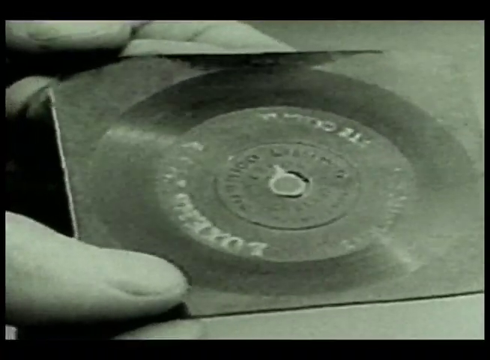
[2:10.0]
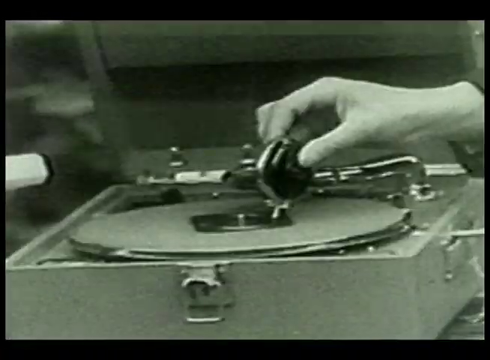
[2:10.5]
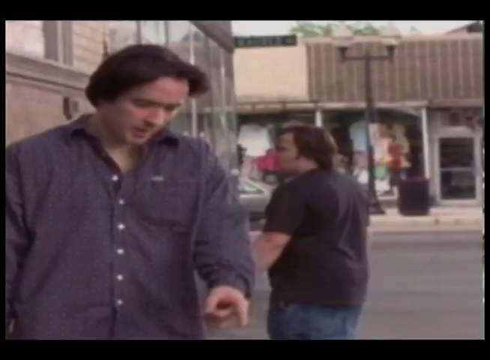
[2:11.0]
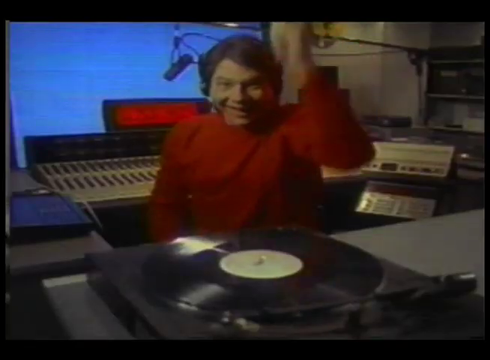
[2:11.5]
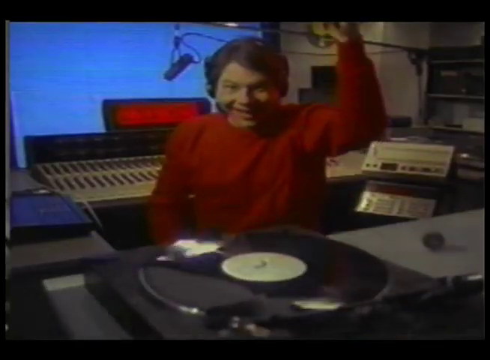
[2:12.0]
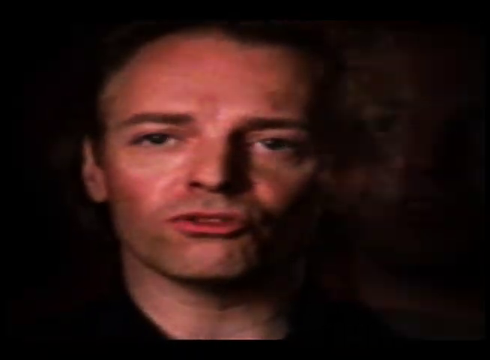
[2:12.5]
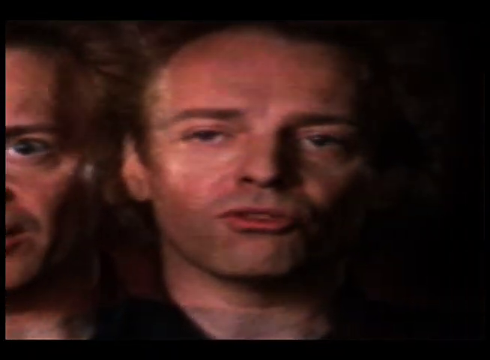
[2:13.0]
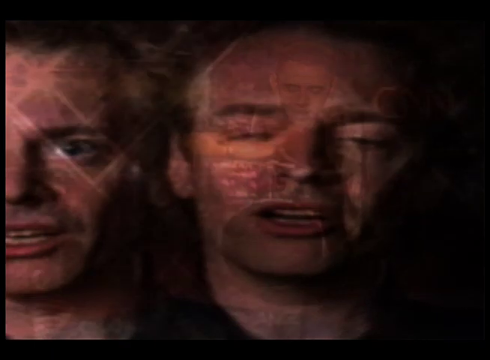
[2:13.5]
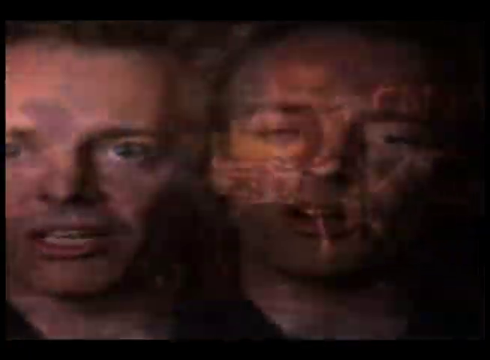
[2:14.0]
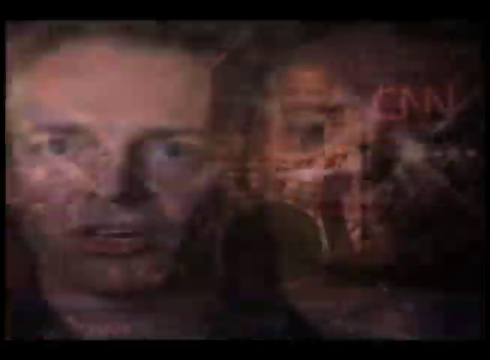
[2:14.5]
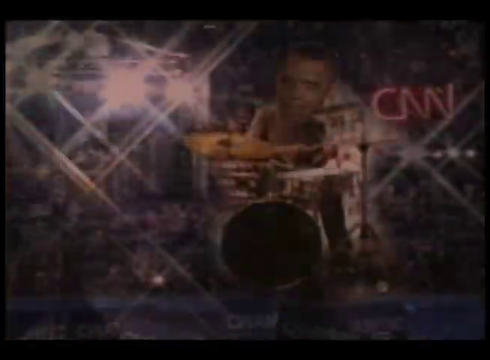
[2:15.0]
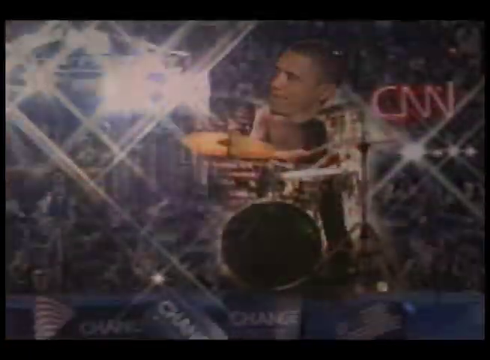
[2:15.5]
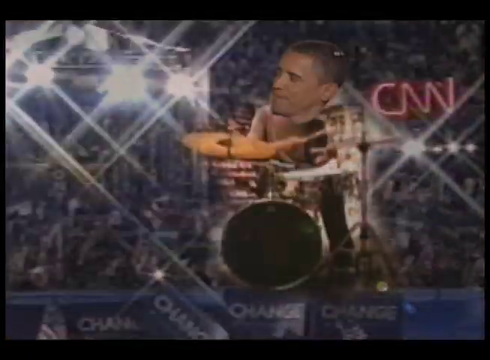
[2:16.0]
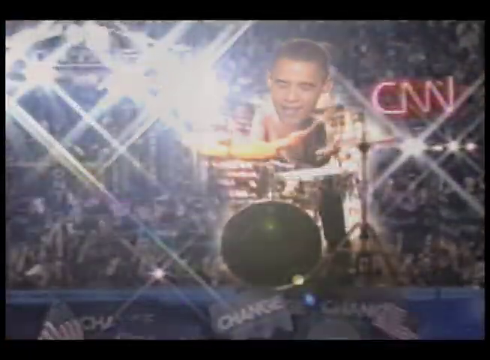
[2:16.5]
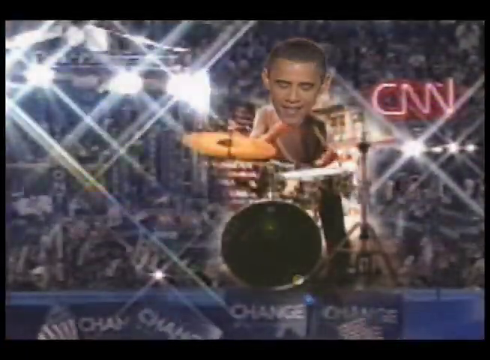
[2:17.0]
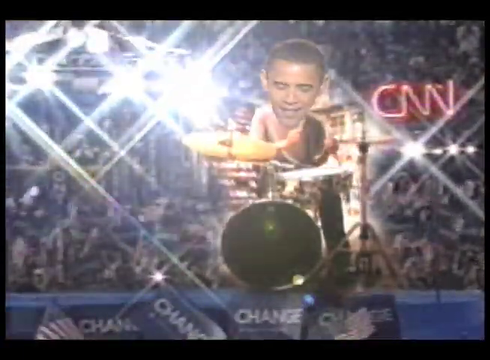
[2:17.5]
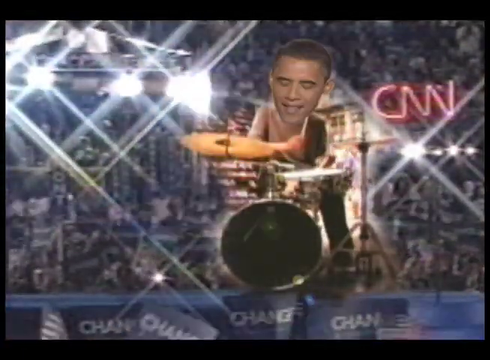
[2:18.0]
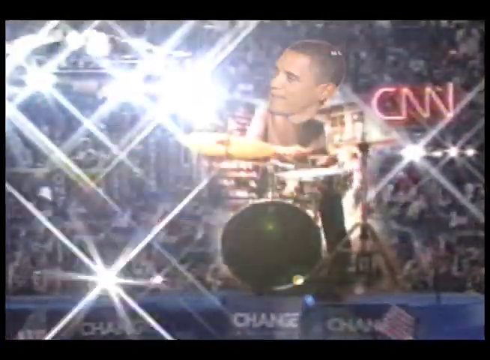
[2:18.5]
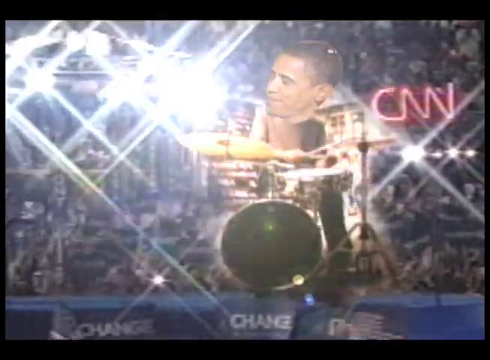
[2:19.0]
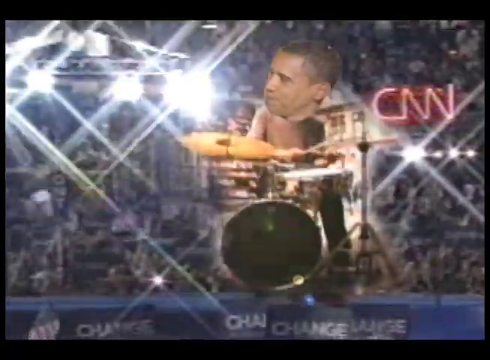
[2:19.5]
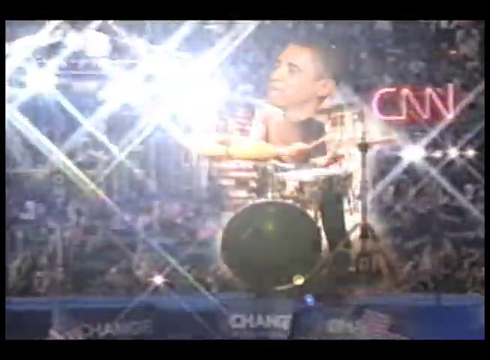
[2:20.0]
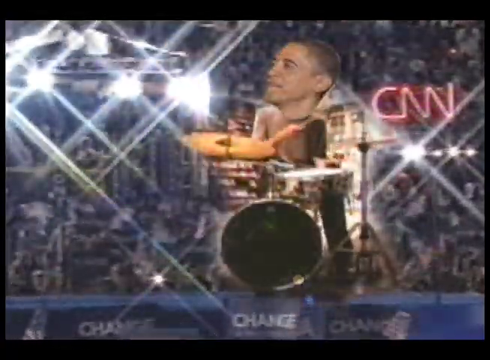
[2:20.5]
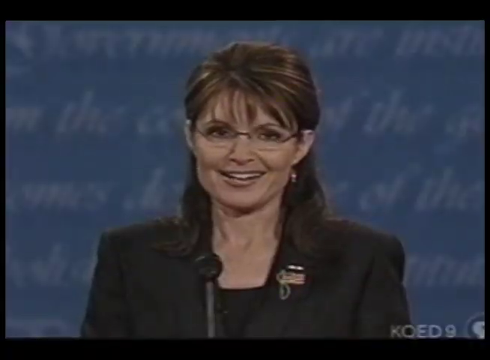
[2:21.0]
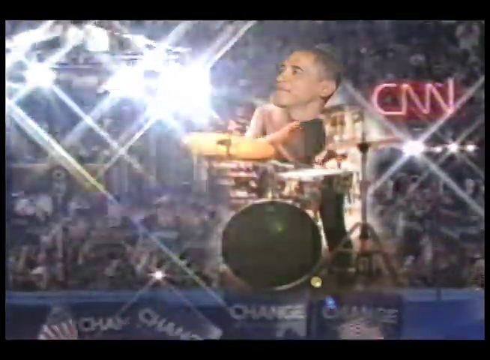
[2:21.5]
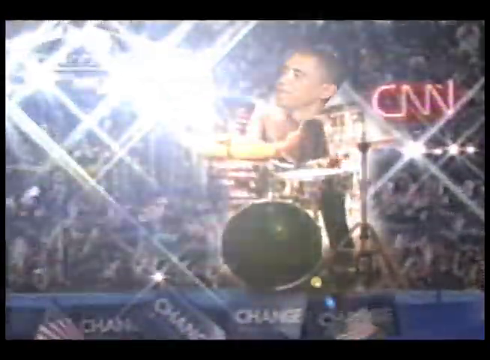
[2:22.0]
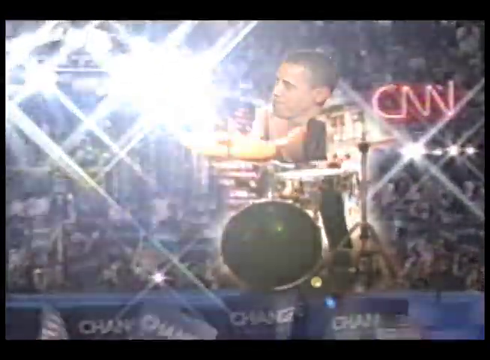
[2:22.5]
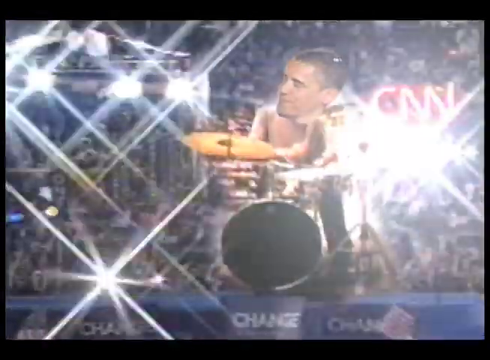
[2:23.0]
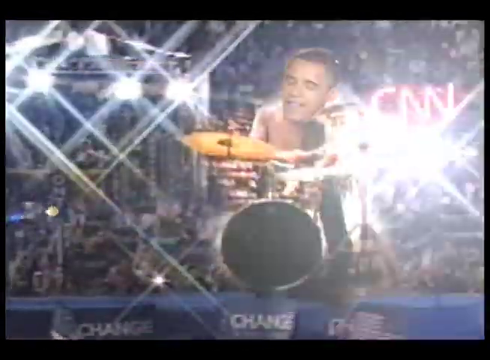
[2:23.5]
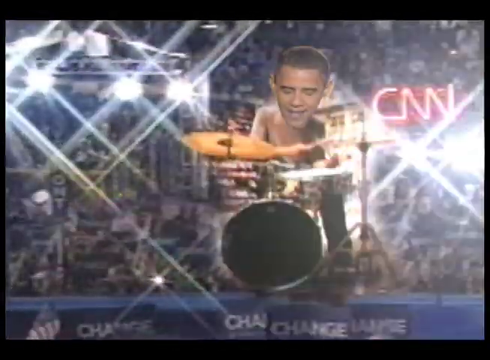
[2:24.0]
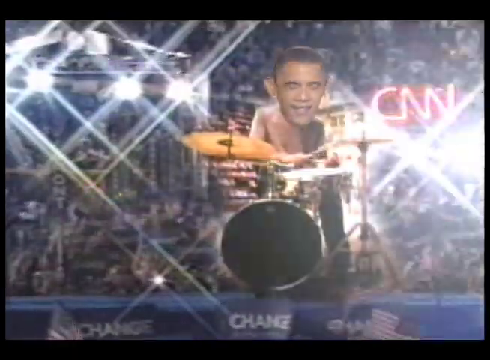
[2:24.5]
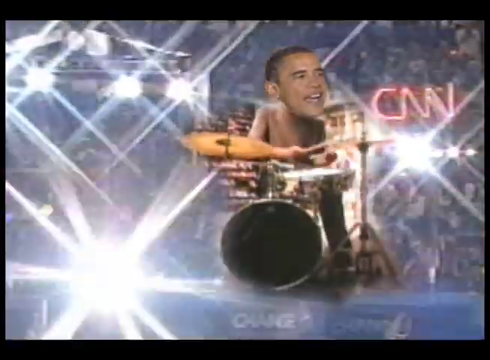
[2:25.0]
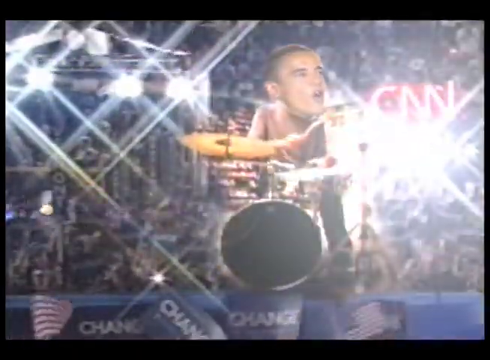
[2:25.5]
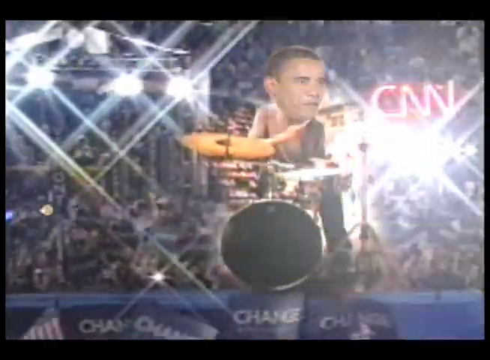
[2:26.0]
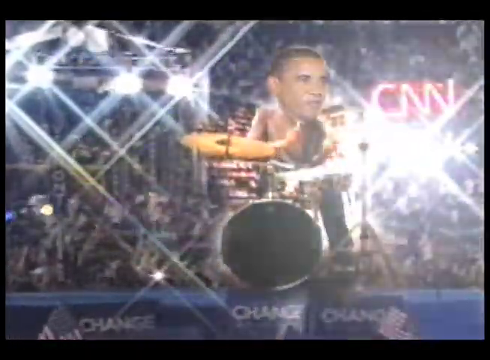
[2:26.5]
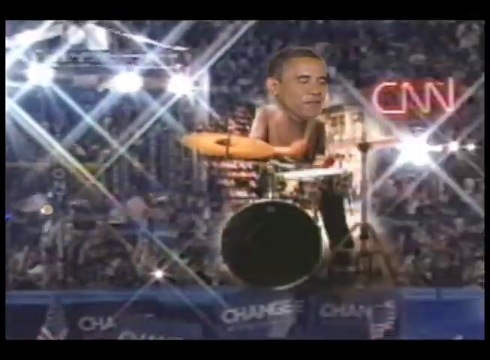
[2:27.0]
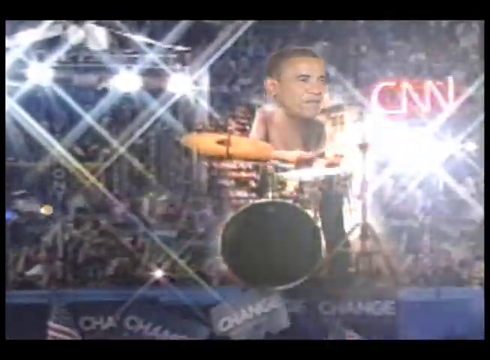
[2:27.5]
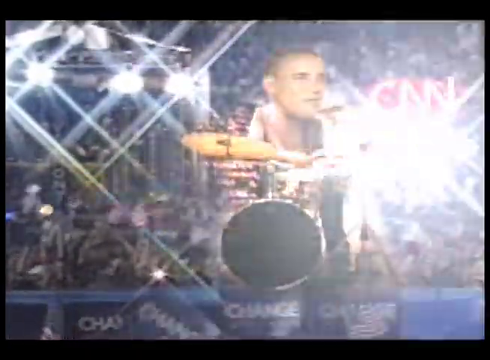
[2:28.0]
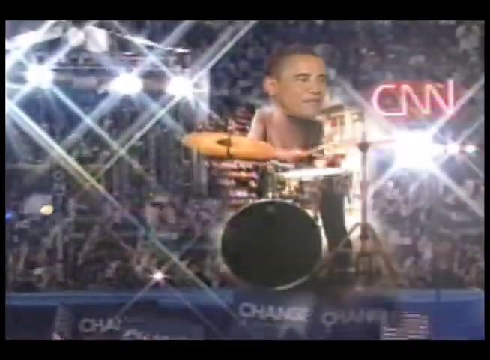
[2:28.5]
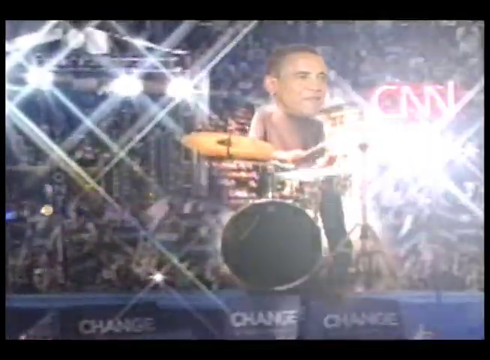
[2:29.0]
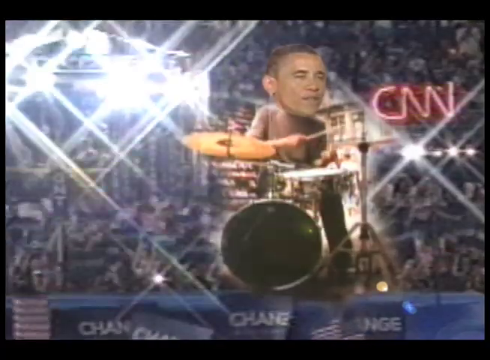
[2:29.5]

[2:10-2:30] The DJ slamming down the record appears first. After the man breaking the record, a succession of faces of the same man appears, one after another, almost as if he were on a conveyor belt. The view then pans to the drumming Obama, his head superimposed on a drummer, at the Democratic National Convention with the crowd in the background. Sarah Palin is shown winking, and the video goes back to the Obama drummer in the concert-like convention setting with the CNN sign in the background. The old-fashioned 45 record is shown again, followed by a very quick closeup of an old-fashioned record player, and then what looks like a movie scene of a man pointing to the ground.